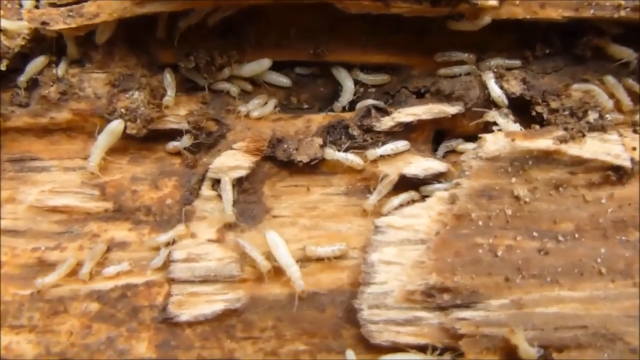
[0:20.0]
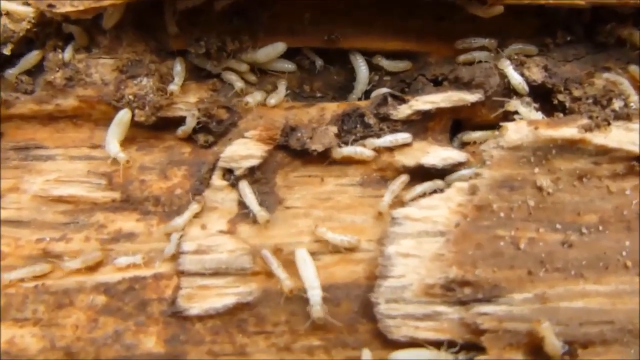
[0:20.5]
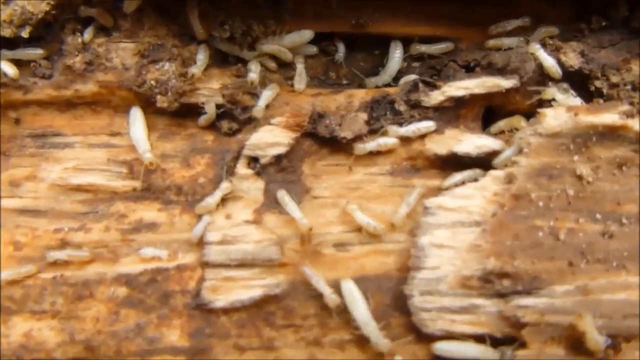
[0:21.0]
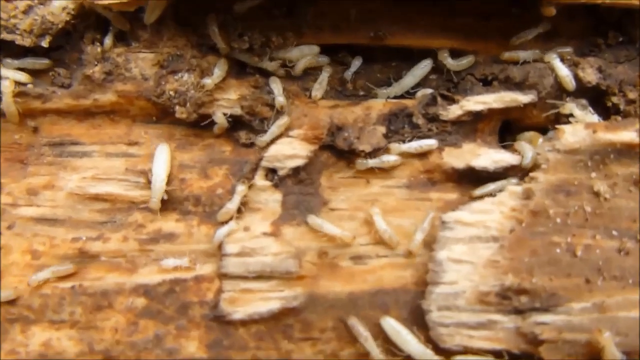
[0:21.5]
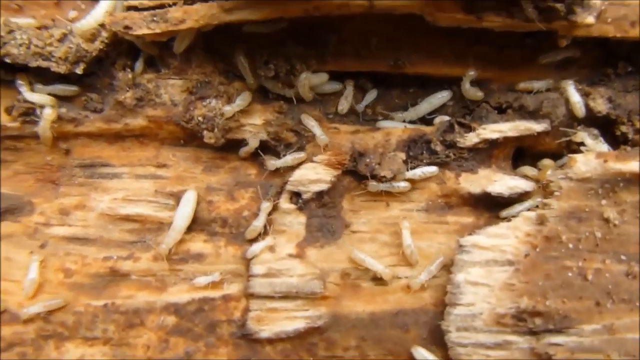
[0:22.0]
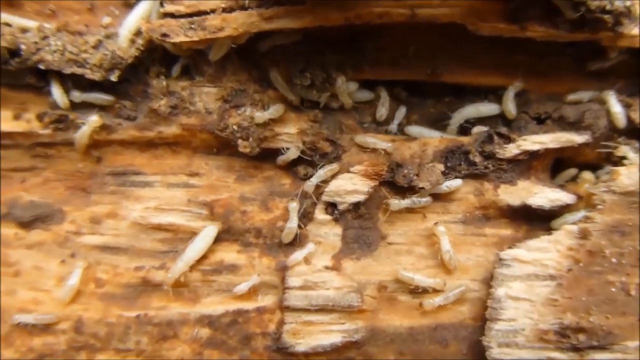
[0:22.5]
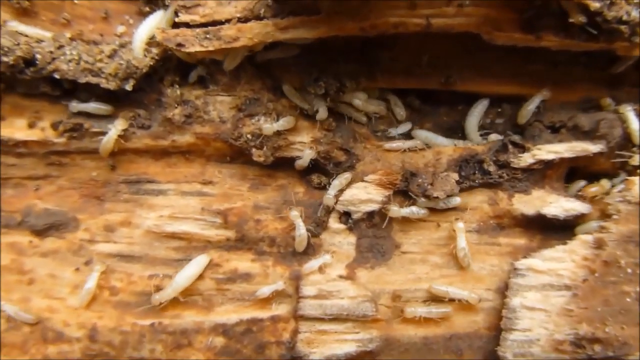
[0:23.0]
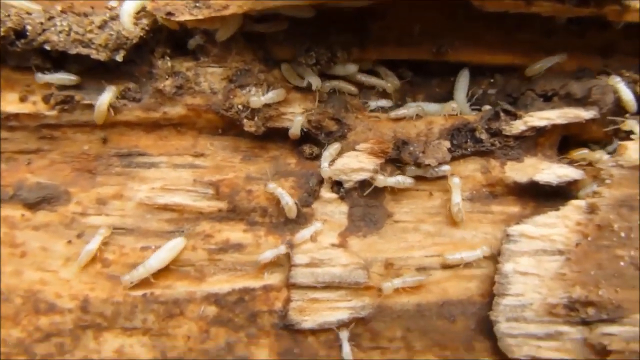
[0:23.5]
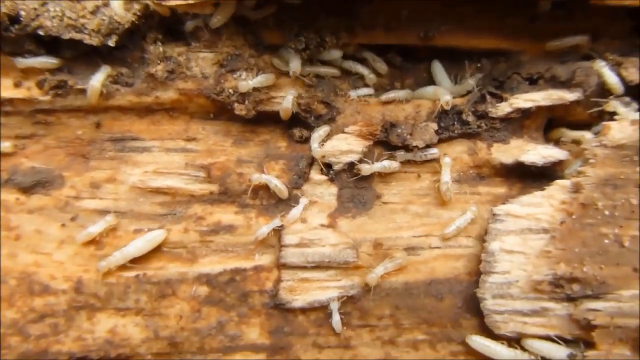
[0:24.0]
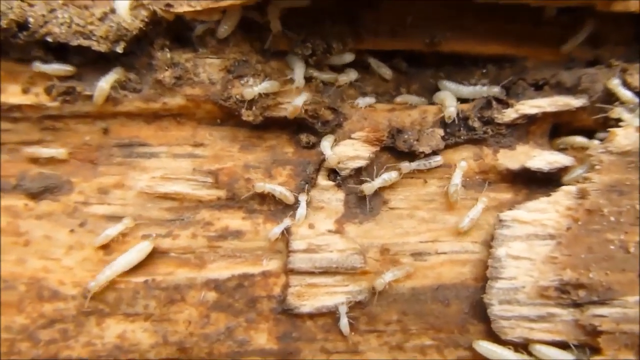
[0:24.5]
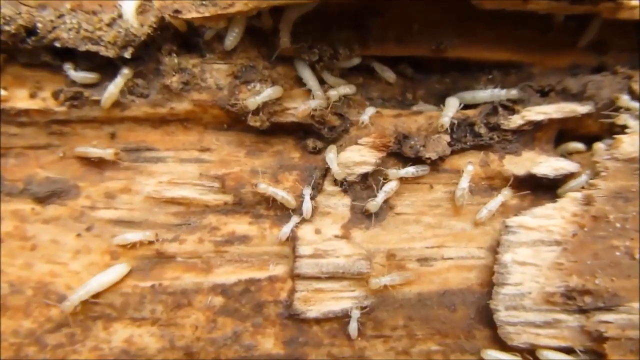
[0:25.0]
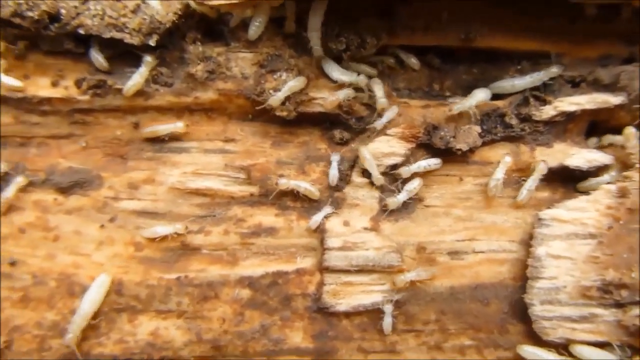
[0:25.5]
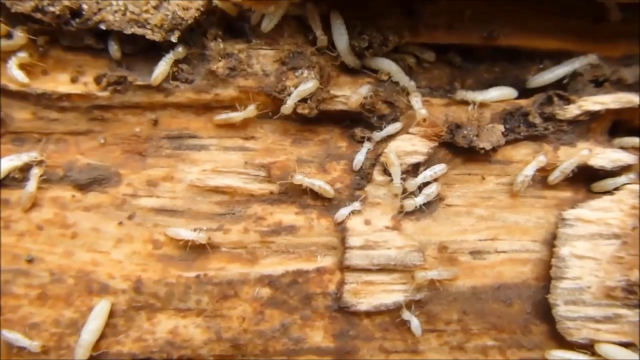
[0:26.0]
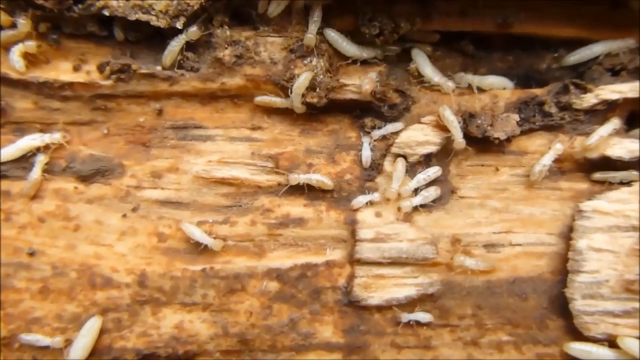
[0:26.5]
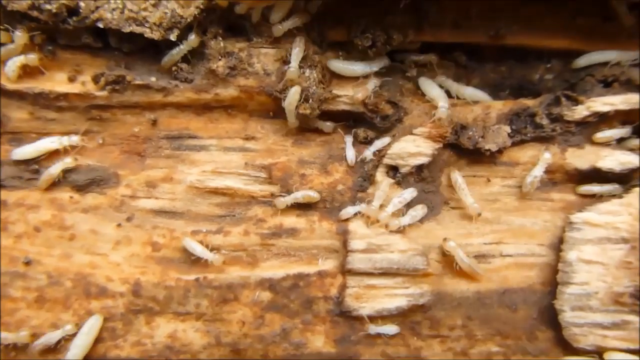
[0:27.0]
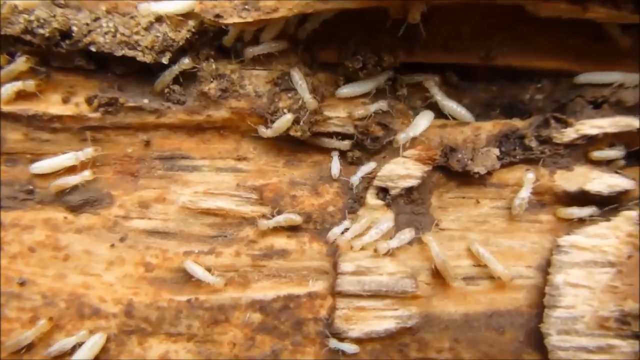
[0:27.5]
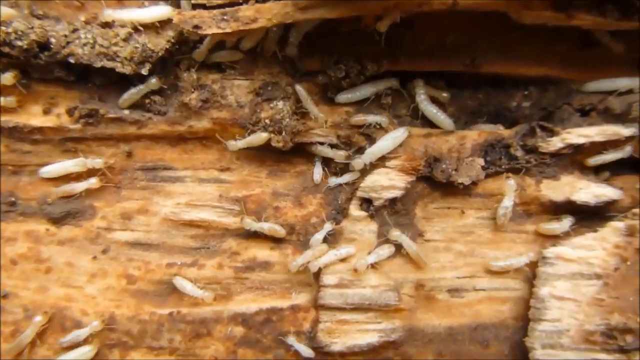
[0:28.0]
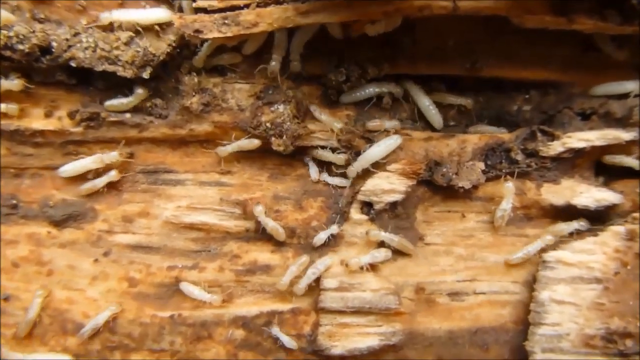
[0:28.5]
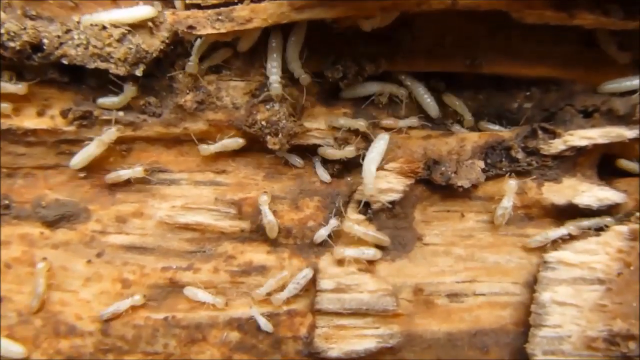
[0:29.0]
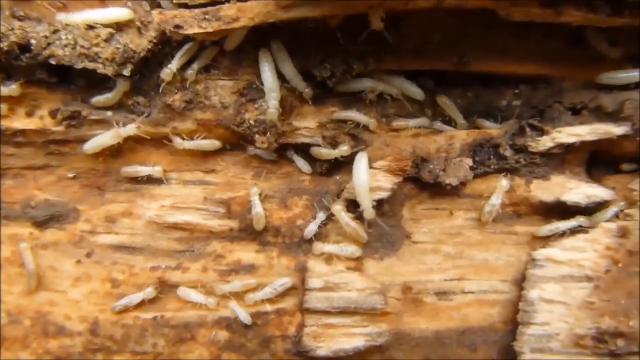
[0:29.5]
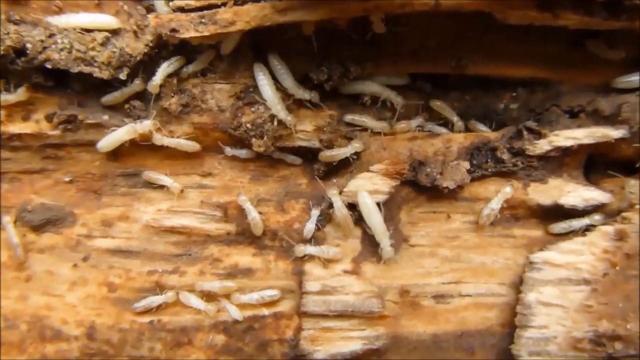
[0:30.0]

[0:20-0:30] On the left side, a big fat maggot, the fattest one, crawls downward. Another big one, not as fat but a little longer and bigger toward the top, crawls over to the right. A few other big maggots enter the scene, apparently many of them coming through a crevice along the top; it is unclear whether the crevice is a split in the wood or under the bark. Judging by the grain, which runs left and right, the tree is lying on its side. The maggots are mostly around the center of the screen and deep in the crevice near the top, moving around the center area, where there is a lot of dirt and discoloration and what looks like two streaks of white wood.